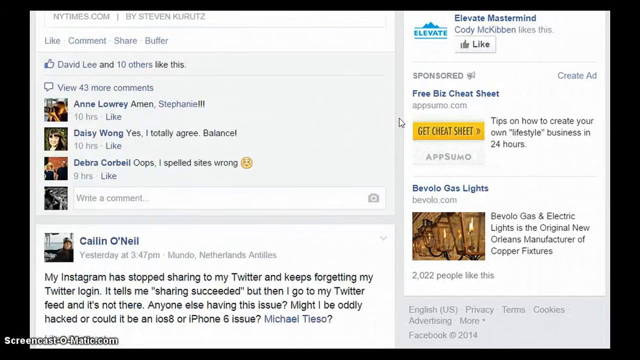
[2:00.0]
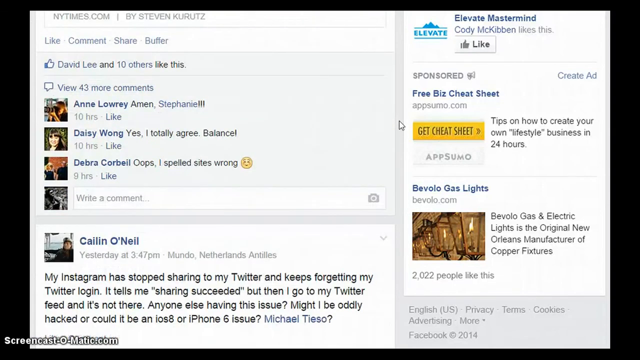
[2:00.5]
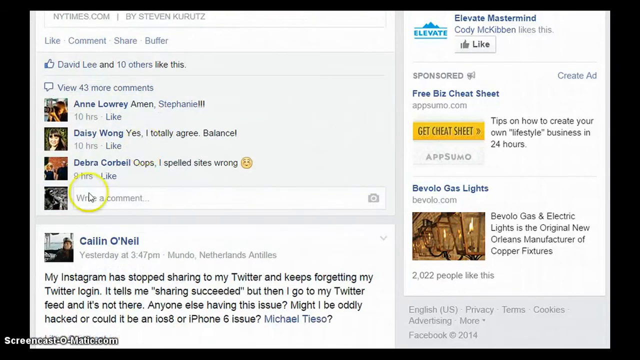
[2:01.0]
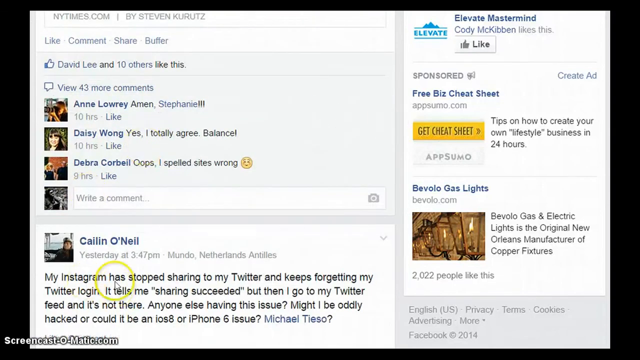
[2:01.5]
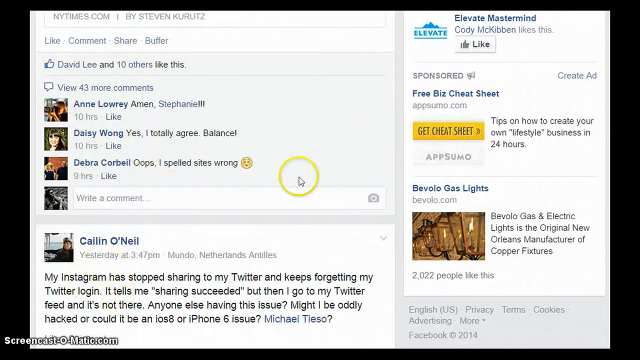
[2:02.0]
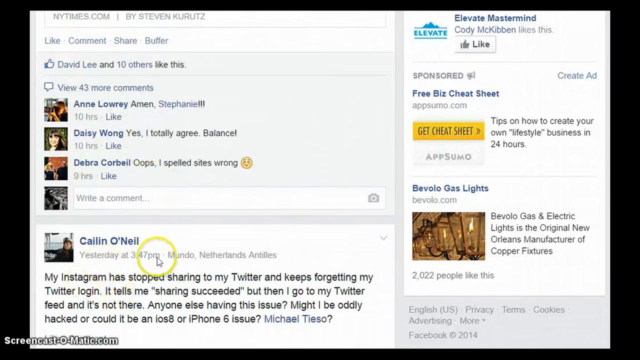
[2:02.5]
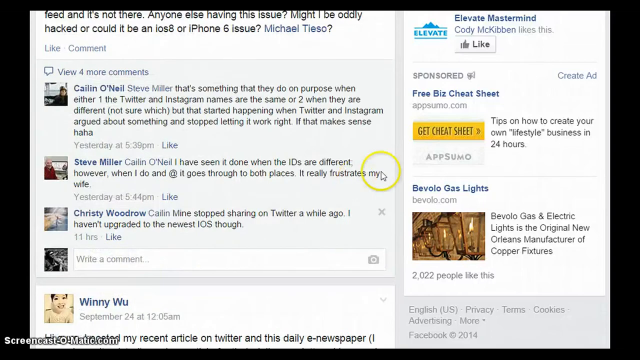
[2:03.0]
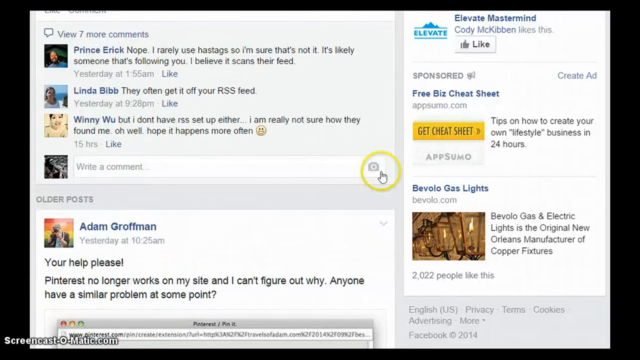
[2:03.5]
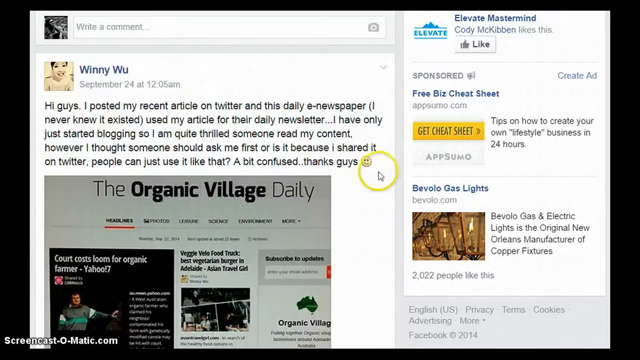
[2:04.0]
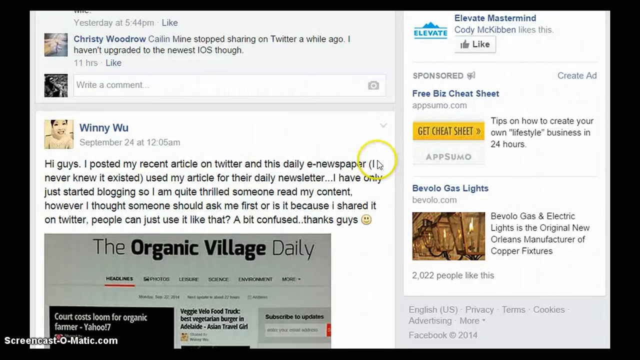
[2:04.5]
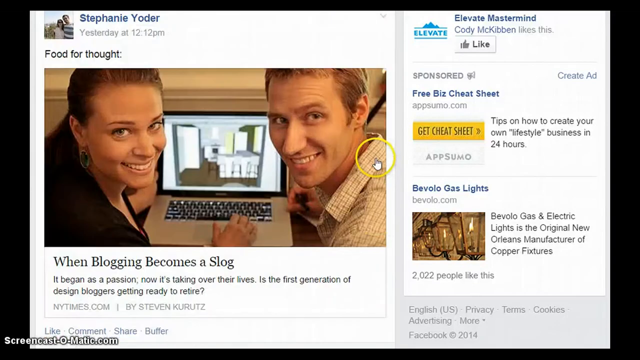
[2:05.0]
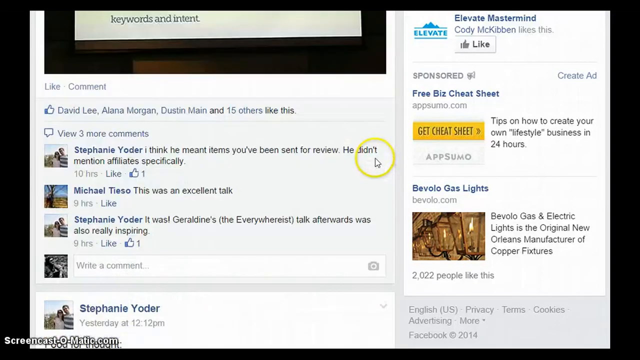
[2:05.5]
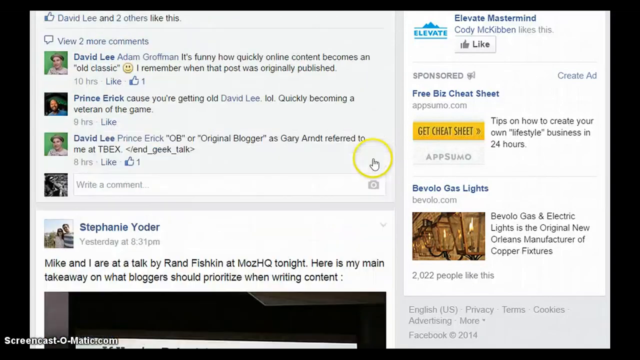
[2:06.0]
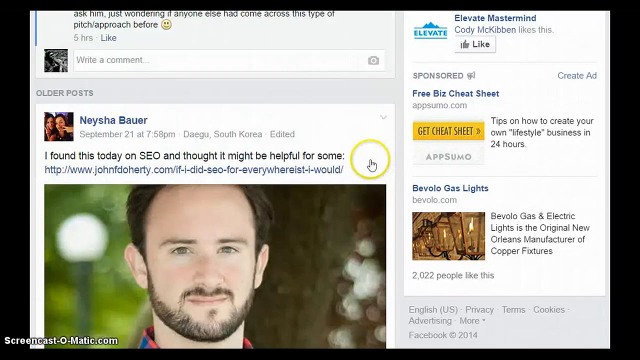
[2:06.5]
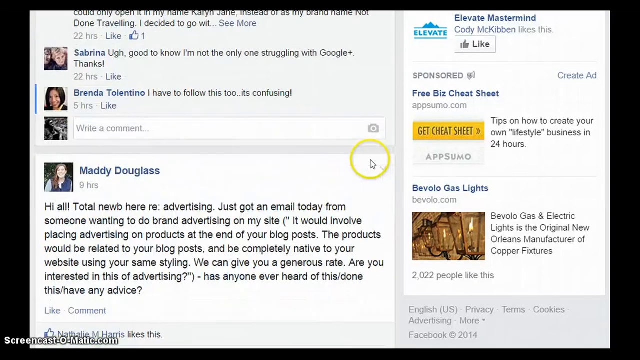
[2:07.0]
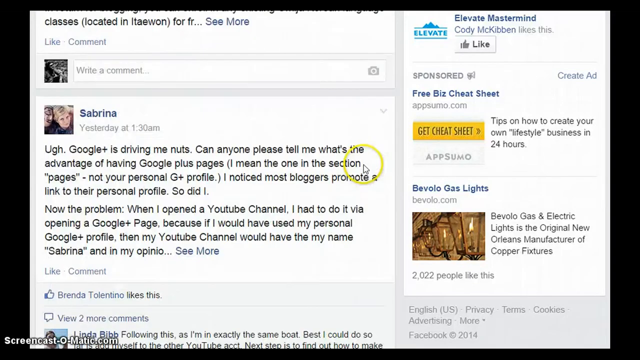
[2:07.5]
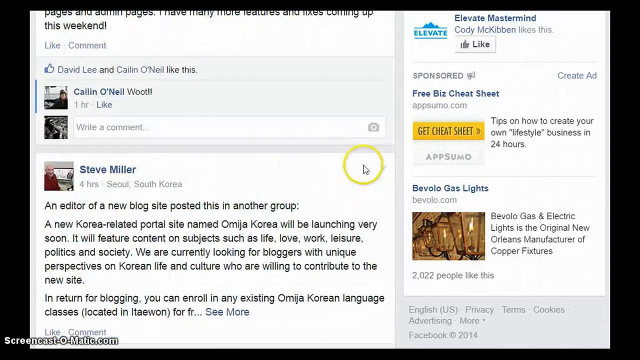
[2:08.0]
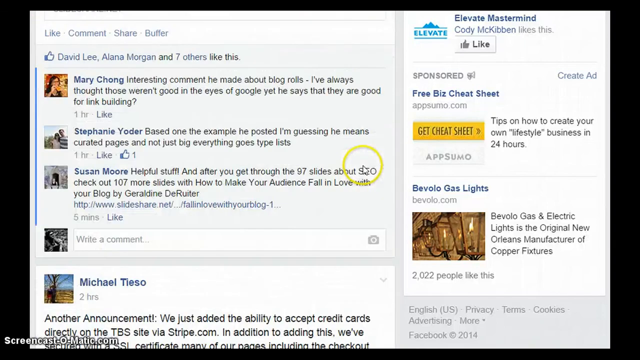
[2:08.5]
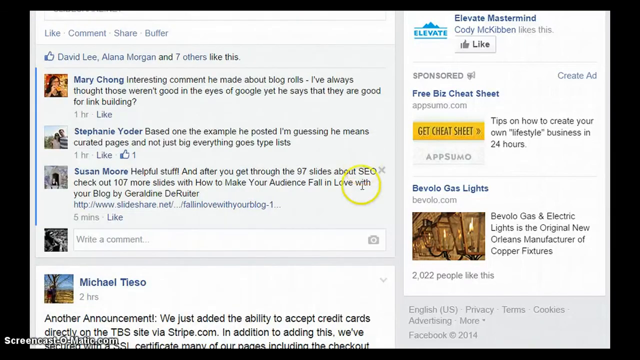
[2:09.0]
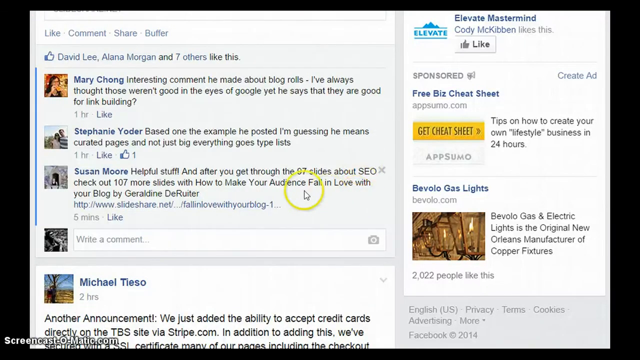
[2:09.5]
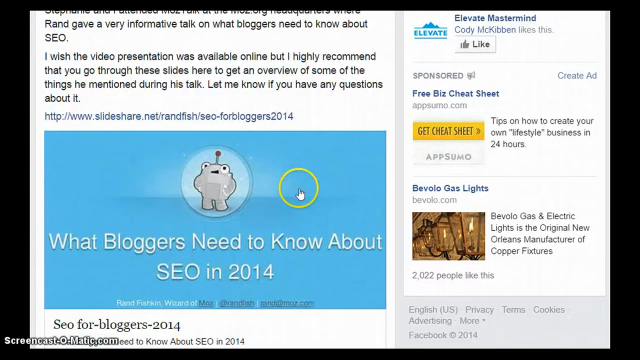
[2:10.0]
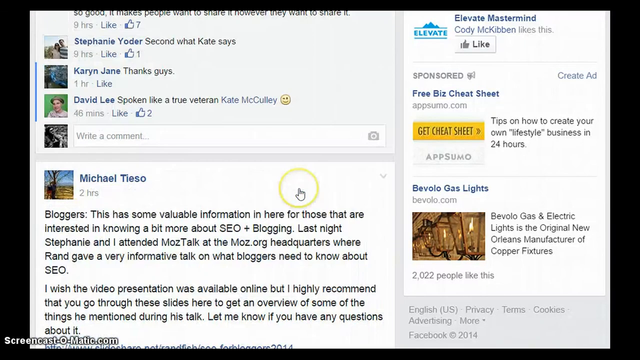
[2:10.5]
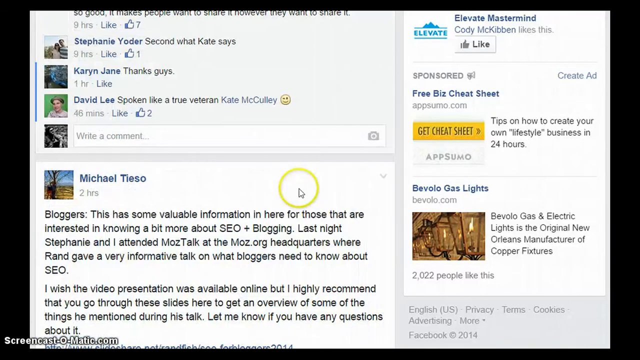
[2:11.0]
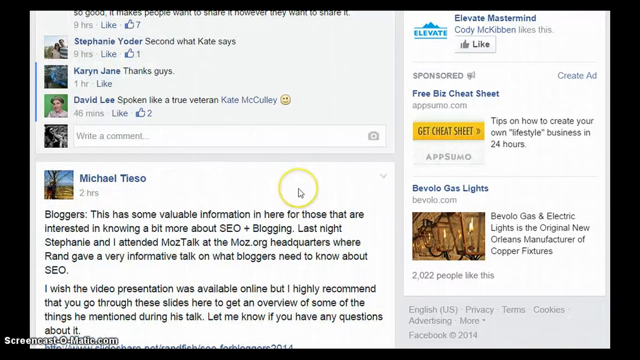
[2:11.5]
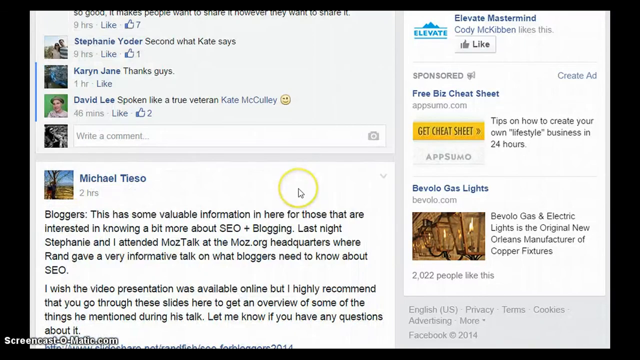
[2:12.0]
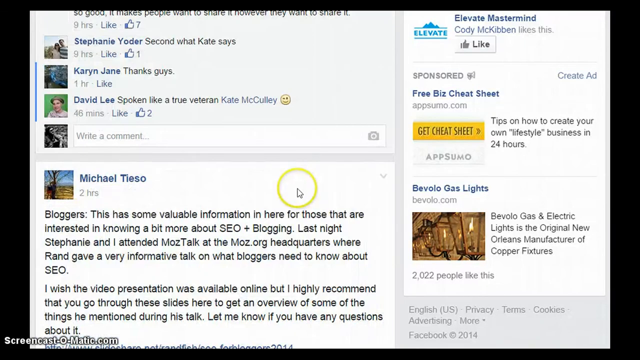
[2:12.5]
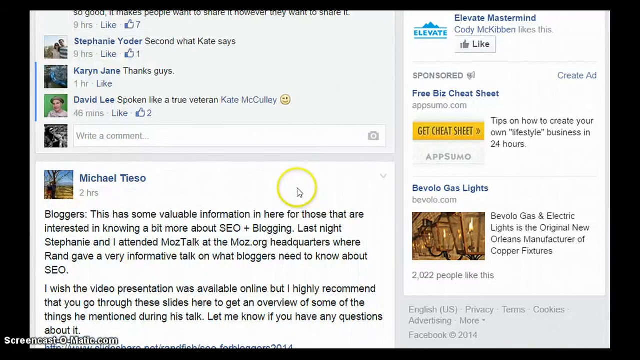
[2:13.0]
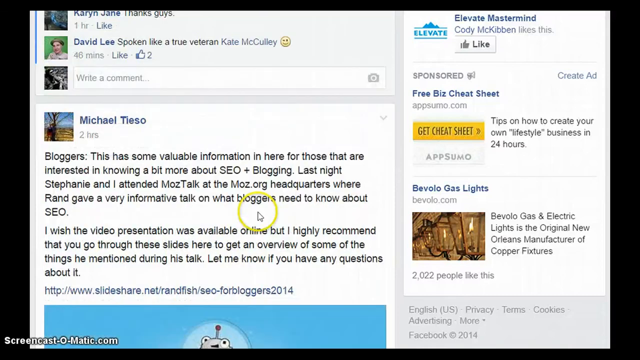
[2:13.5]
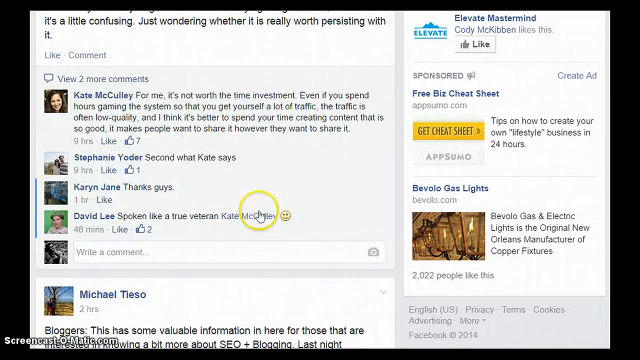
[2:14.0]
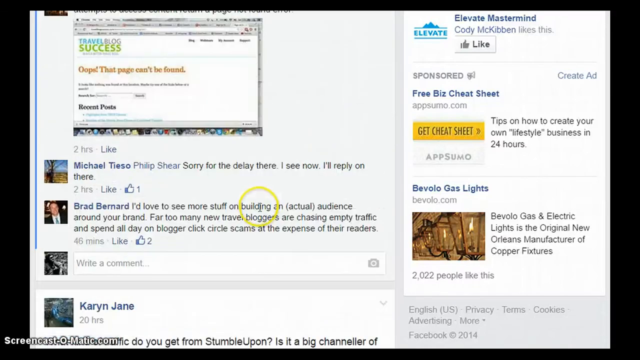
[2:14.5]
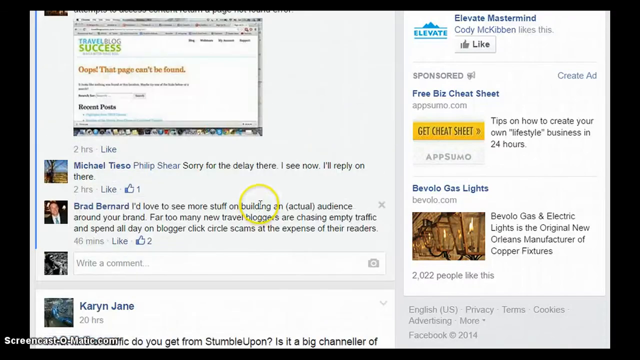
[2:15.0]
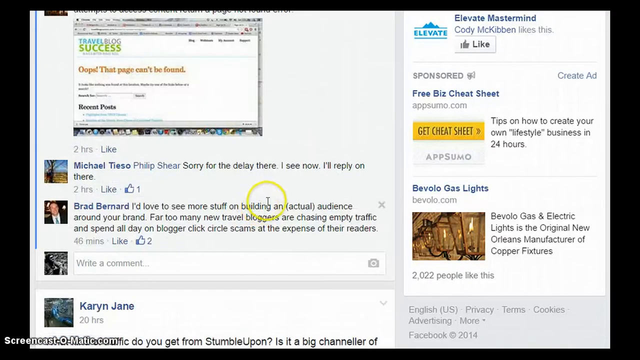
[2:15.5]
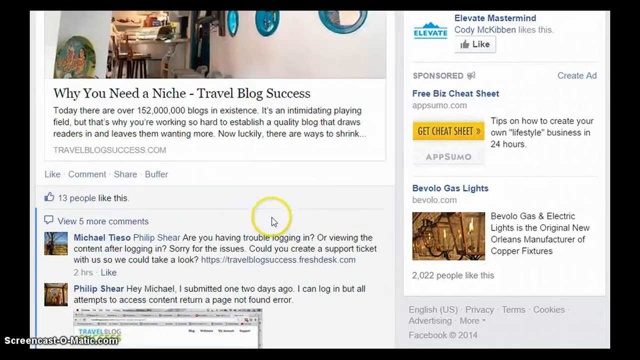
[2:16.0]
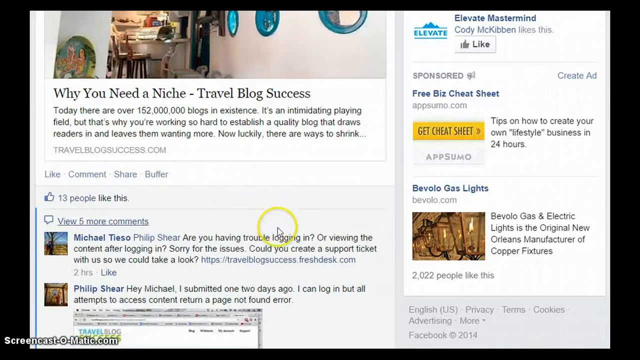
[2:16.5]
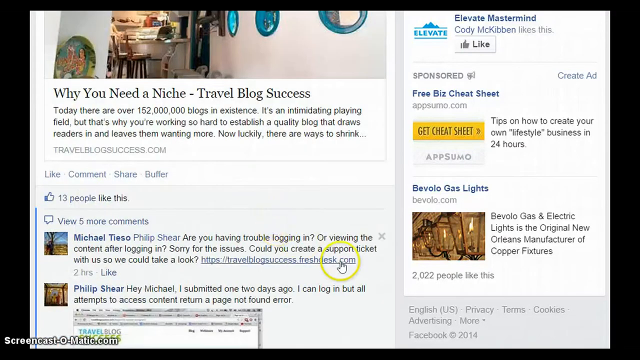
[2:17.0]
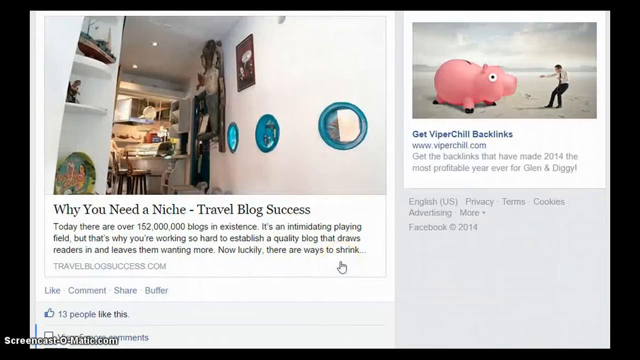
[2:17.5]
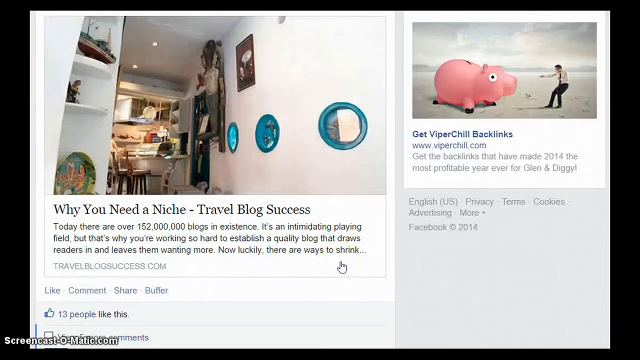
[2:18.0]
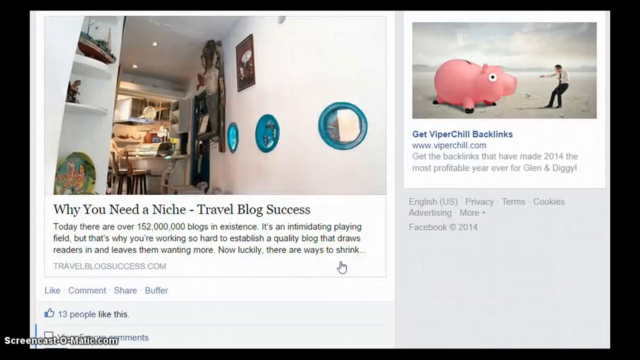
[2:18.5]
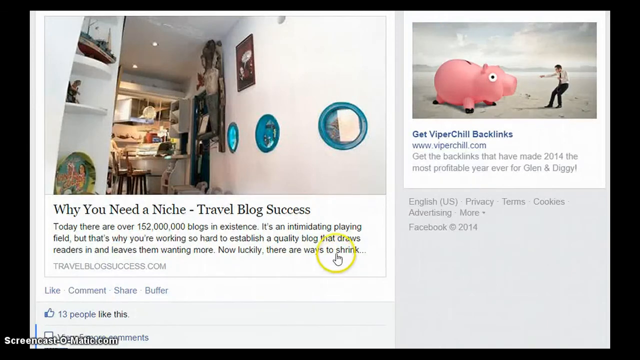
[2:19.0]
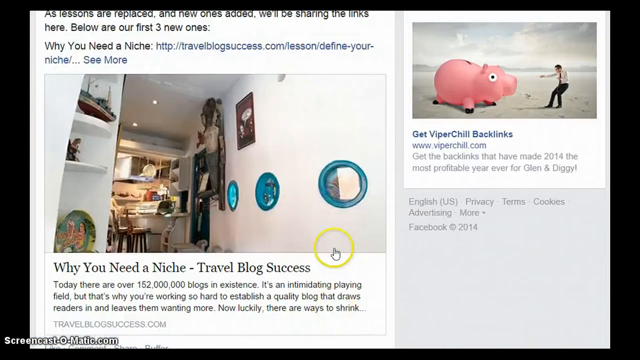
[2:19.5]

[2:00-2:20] A comment area shows people posting about the site's content. One person writes: "Hi guys I posted my recent articles on Twitter and this daily e-newsletter newspaper I never knew it existed used my article for their daily newsletter. I have only just started blogging so I'm quite thrilled someone had my content however I thought someone should ask me first or is it because I shared it on Twitter people can just use it like that a bit confused thanks guys." Another post reads "Mike and I are at a talk by Ran Fishkin" and continues "Here's my main takeaway on what bloggers should prioritize when writing contents", going on about what he feels should be prioritized. Mary Chong writes: "interesting comment he made about blog roles I've always thought those weren't good in the eyes of Google yet he says that they are good for link building". Stephanie Yoder writes: "based on the example he posted I'm guessing he means curated pages".